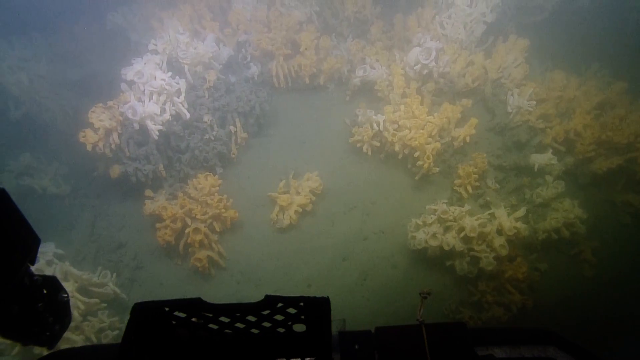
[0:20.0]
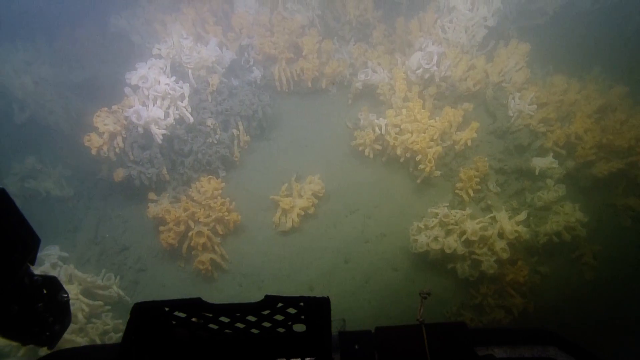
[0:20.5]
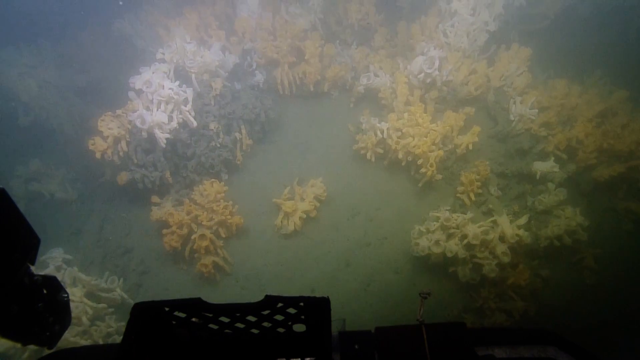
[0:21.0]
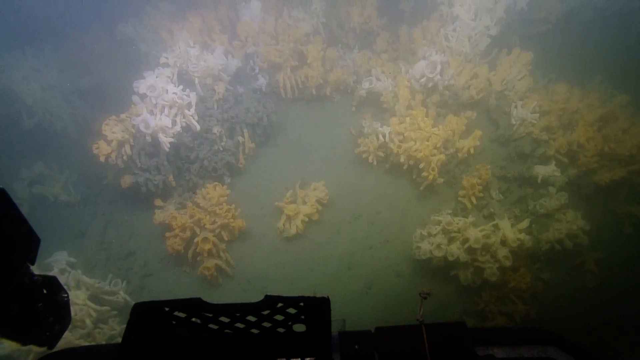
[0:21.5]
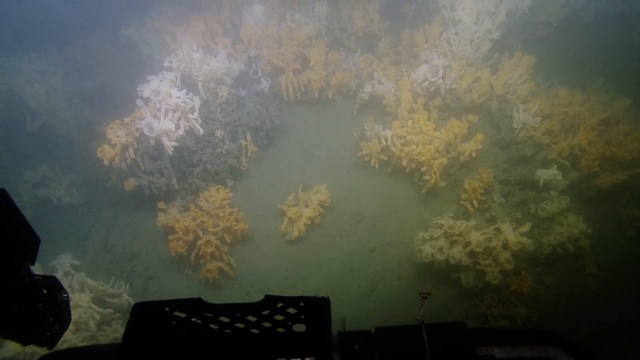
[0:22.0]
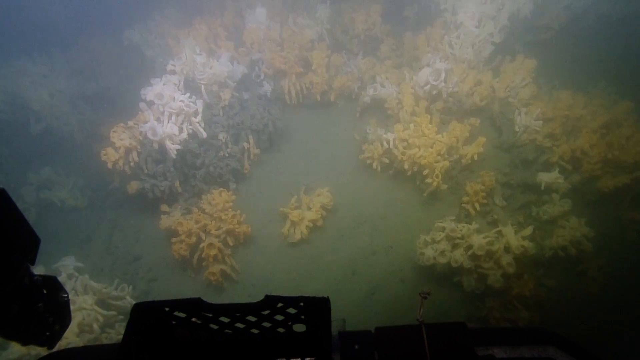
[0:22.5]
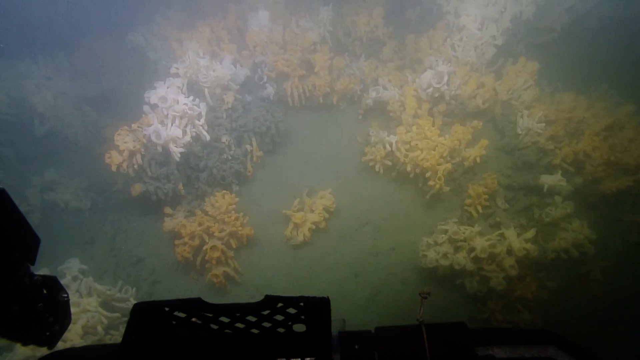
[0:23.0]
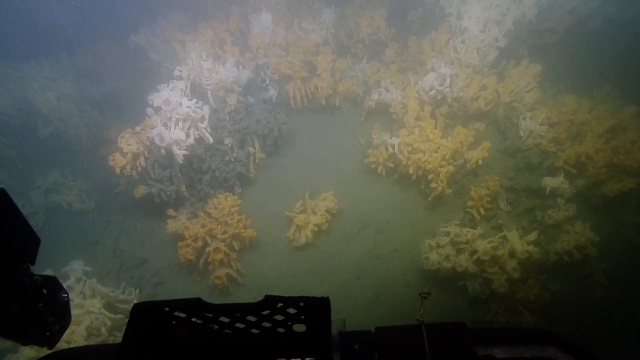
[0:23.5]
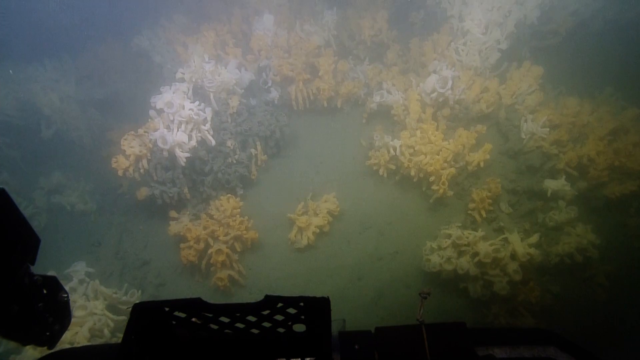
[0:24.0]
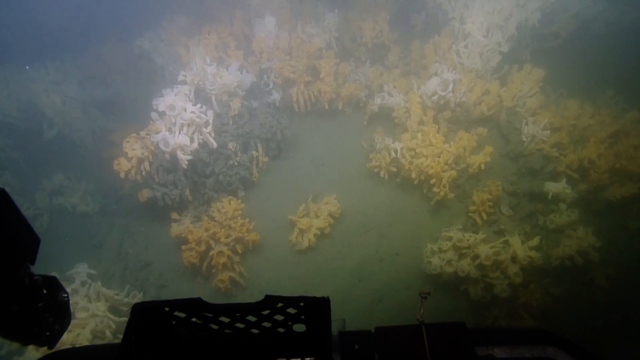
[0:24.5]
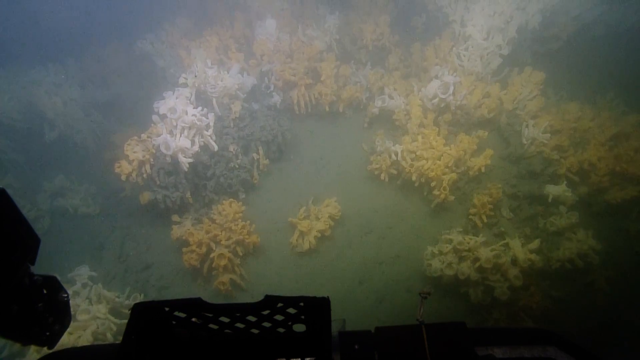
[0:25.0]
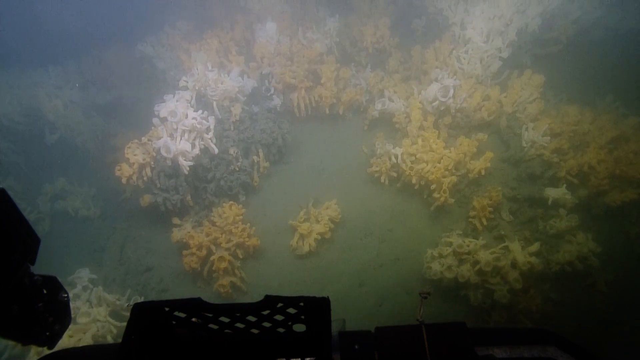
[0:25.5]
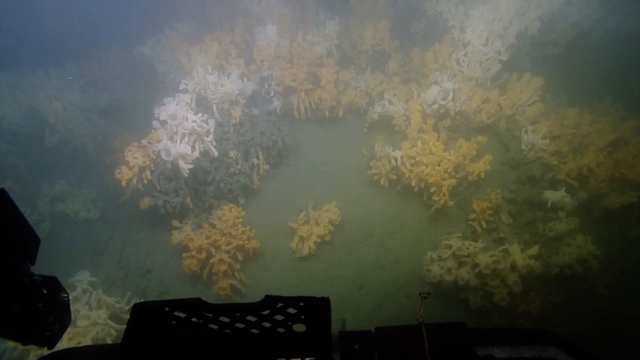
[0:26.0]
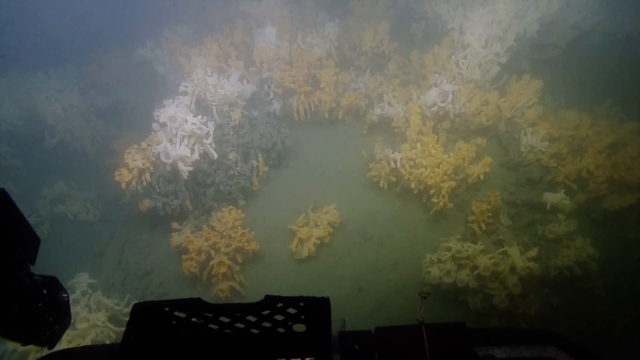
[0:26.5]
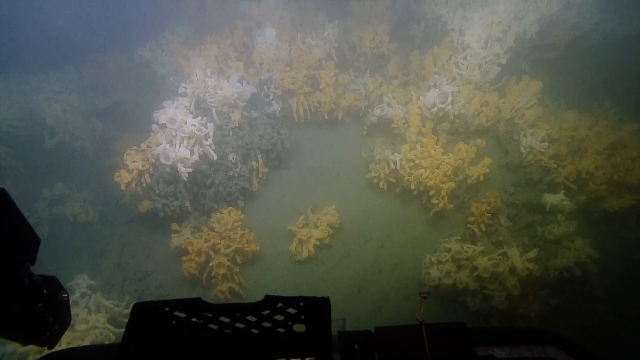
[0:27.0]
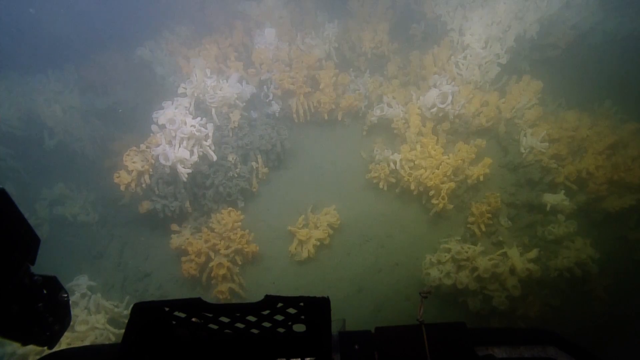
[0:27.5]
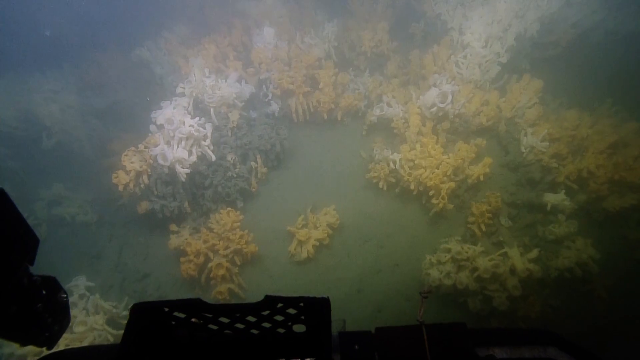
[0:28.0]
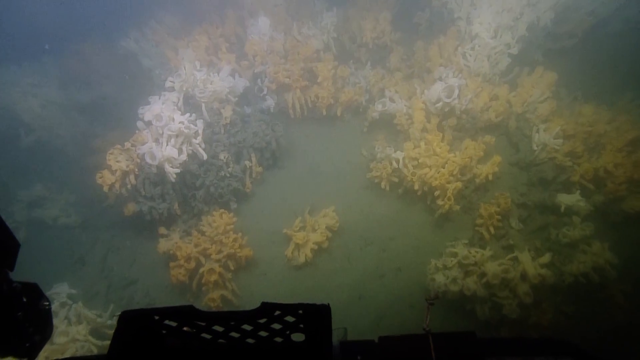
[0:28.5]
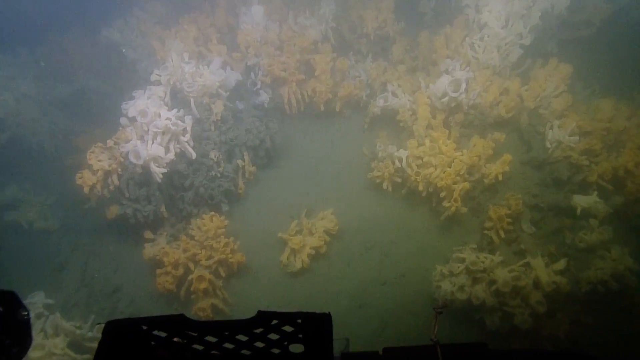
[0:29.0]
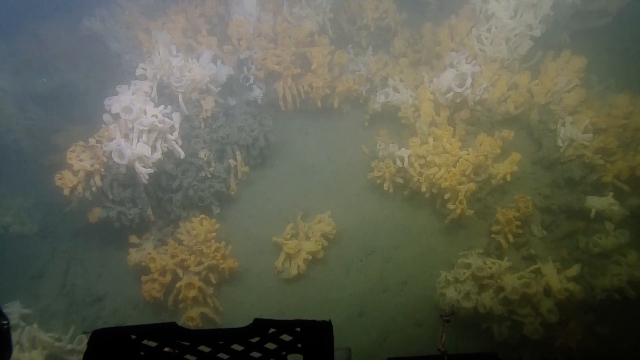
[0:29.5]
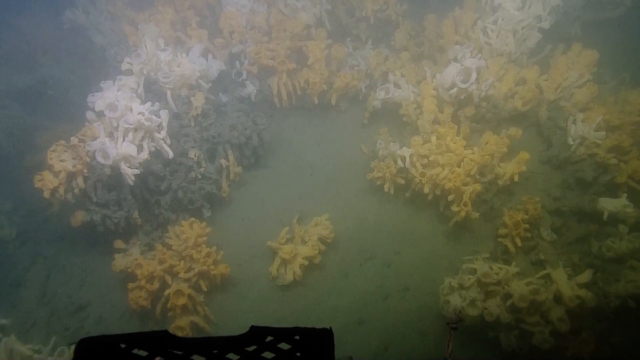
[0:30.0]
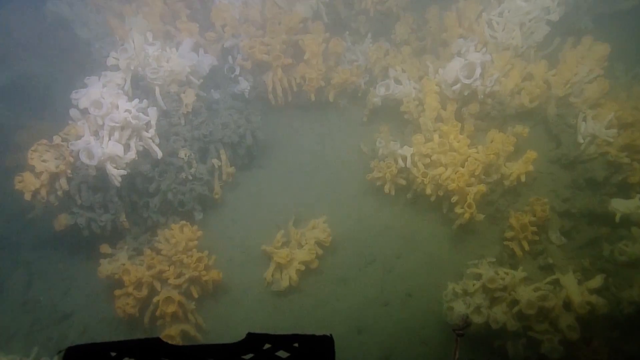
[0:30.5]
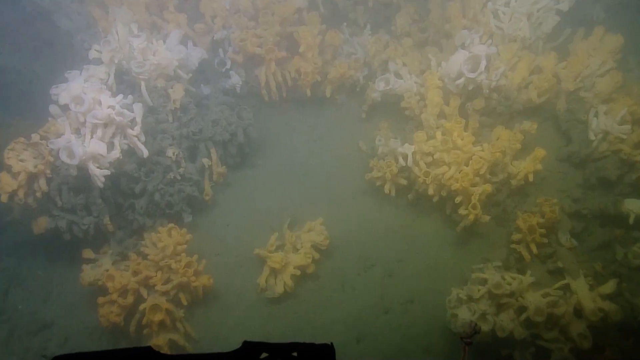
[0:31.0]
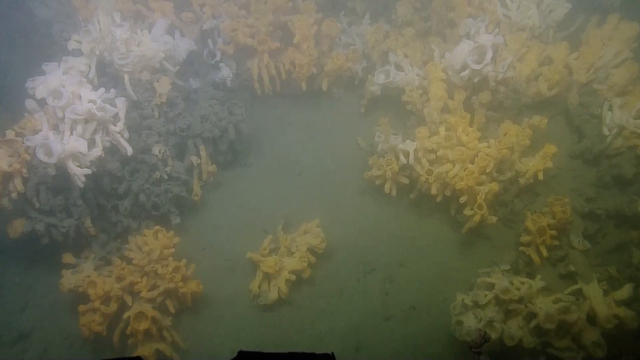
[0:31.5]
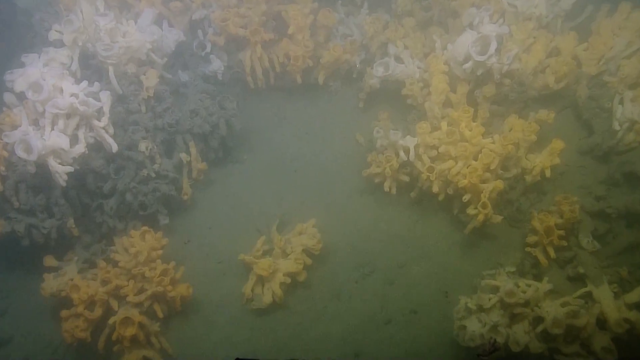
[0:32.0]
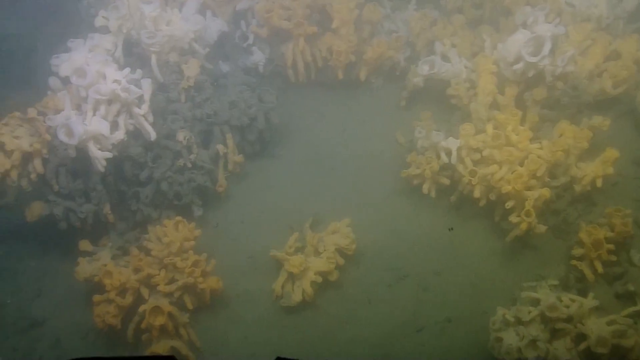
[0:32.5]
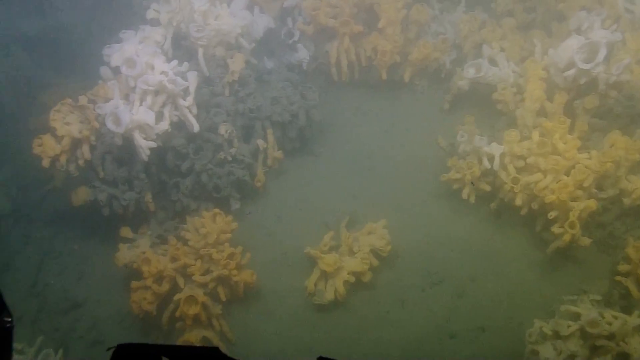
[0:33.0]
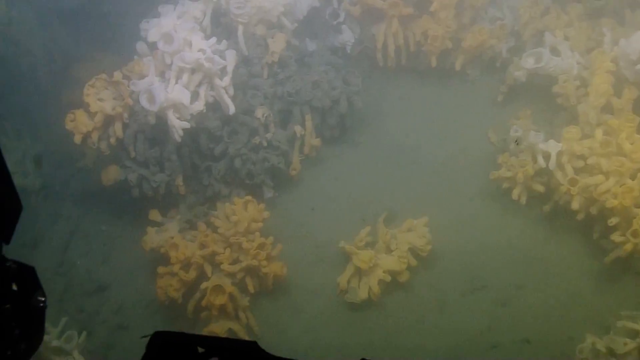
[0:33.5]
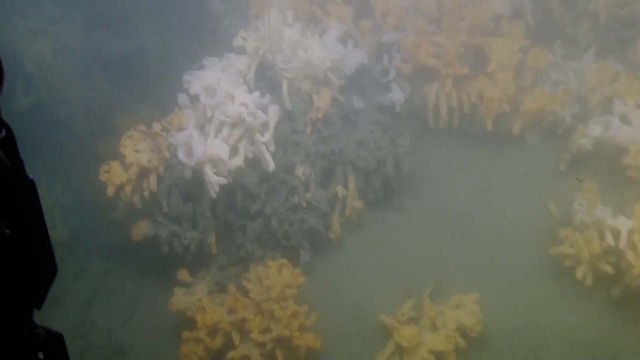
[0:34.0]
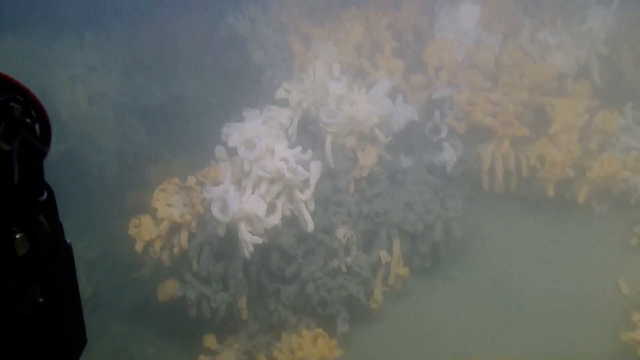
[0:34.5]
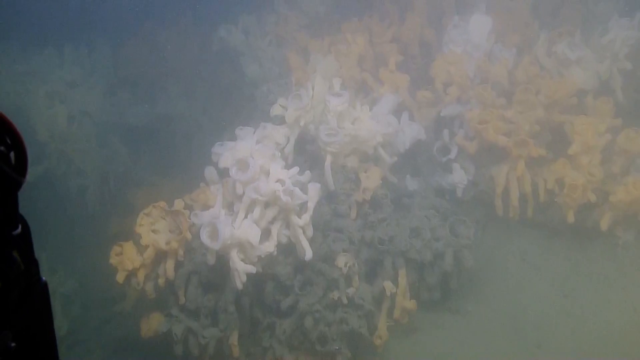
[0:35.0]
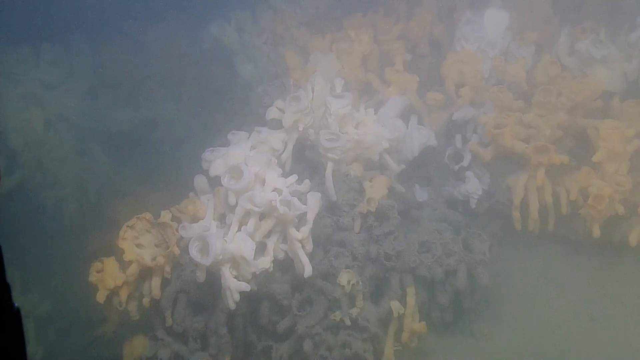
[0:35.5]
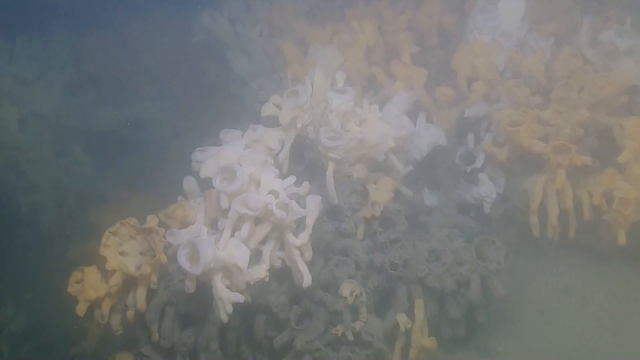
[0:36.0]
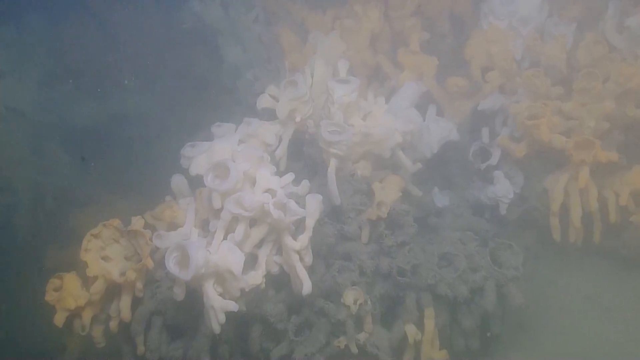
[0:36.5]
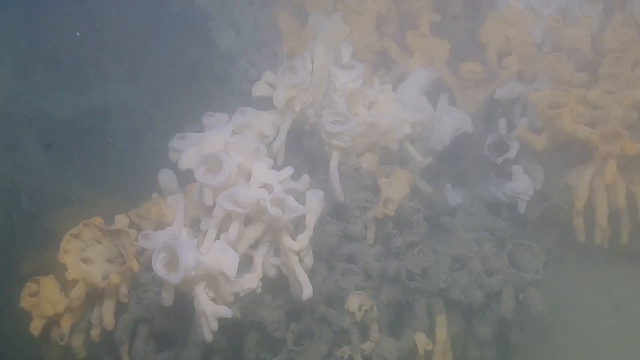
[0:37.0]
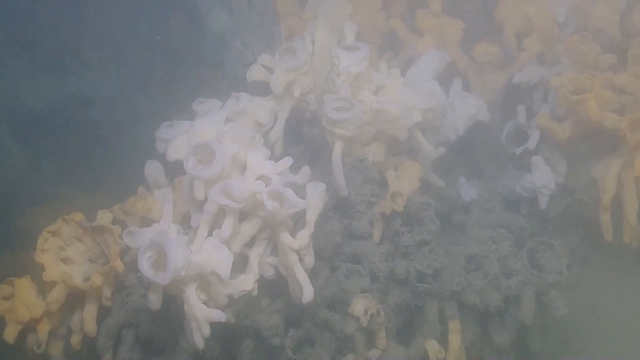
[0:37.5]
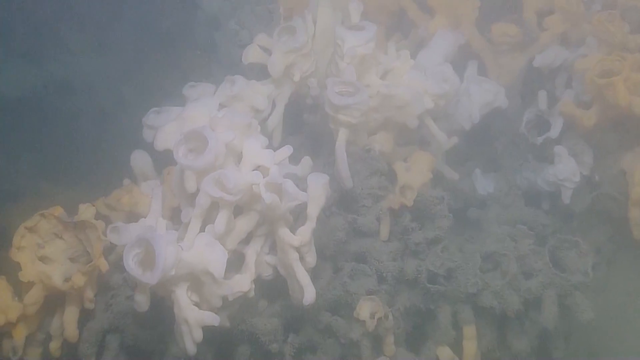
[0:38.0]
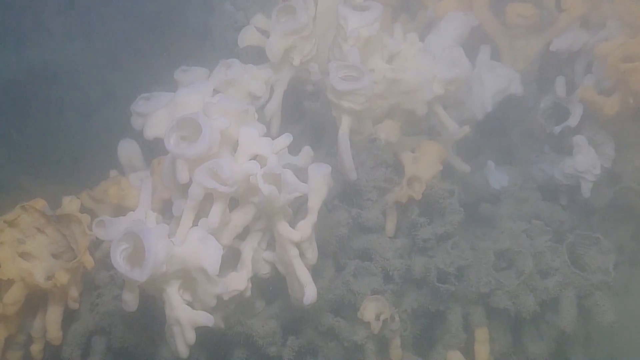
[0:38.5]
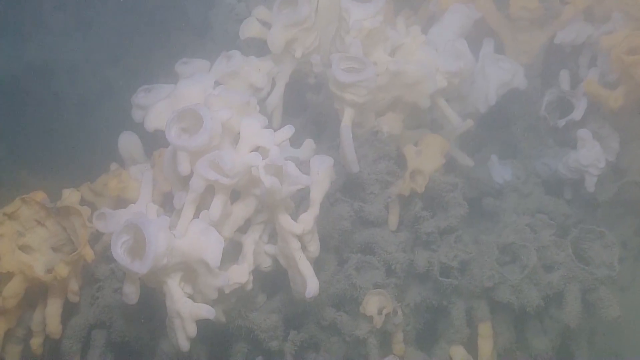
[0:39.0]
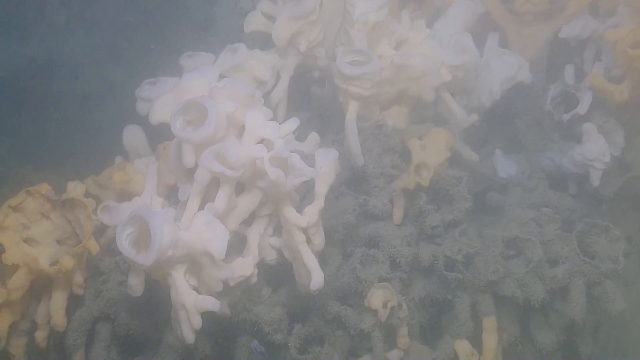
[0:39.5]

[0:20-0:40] The shot appears to be a live picture from a submarine looking down onto a coral reef. The background is light blue or light green sand, somewhat blurry, as if the water is a bit cloudy from debris. The reef is made of white, white-green and light-orange coral, probably half-spherical in shape, like the top half of a circle. The bottom of the screen shows more sand than coral. The view moves up to the left somewhat slowly, revealing more of the reef, then suddenly zooms quickly into the center, then zooms to the left and up, looking very closely at the white part of the coral on the left. It stays zoomed in on the white coral.